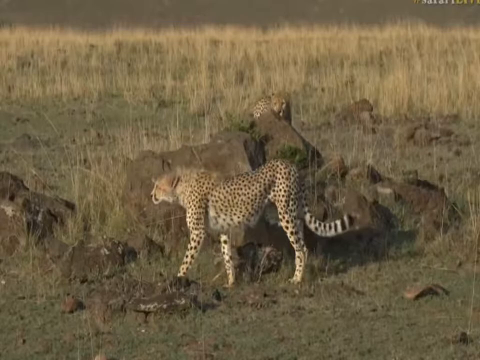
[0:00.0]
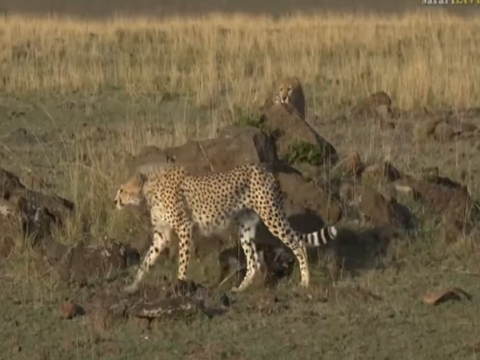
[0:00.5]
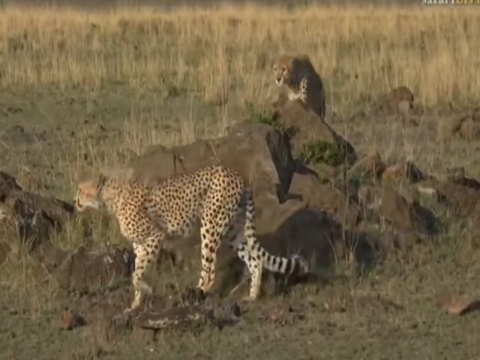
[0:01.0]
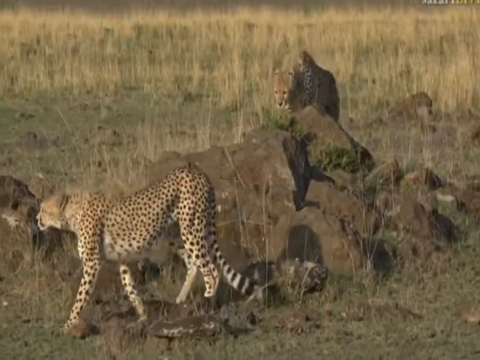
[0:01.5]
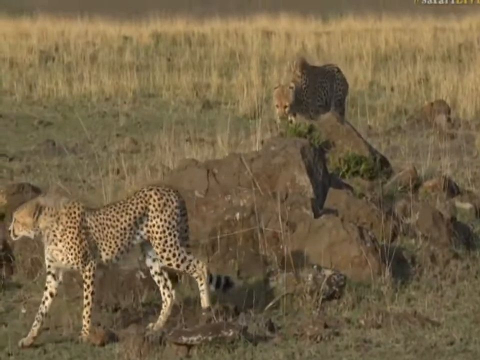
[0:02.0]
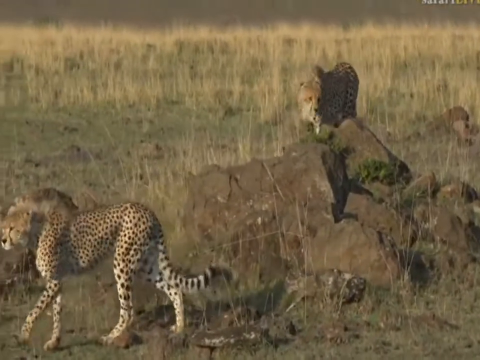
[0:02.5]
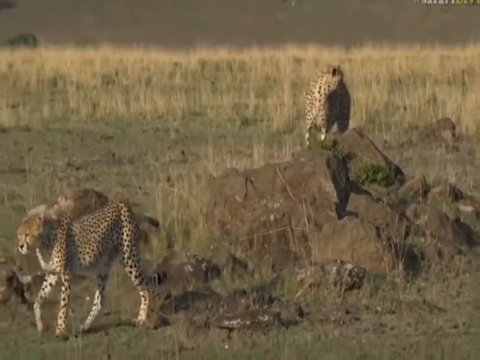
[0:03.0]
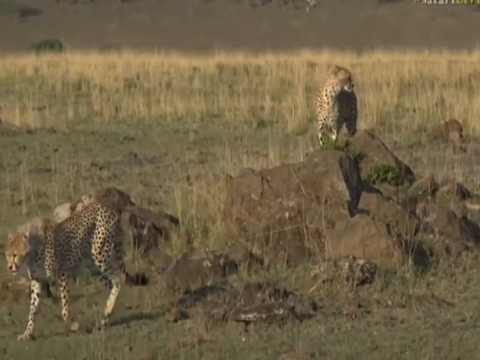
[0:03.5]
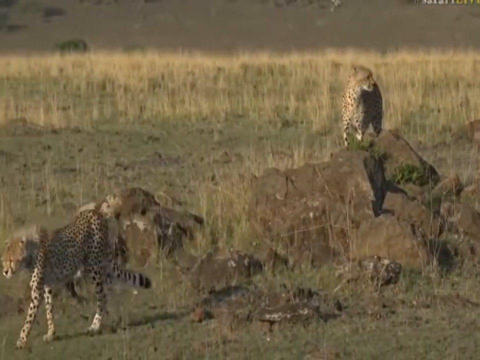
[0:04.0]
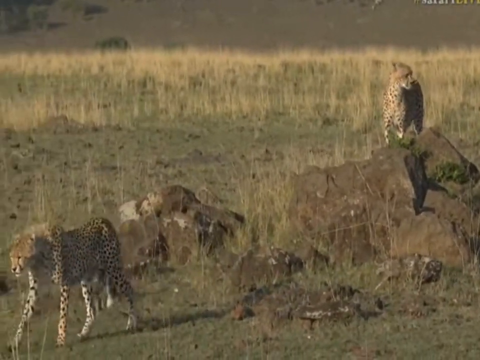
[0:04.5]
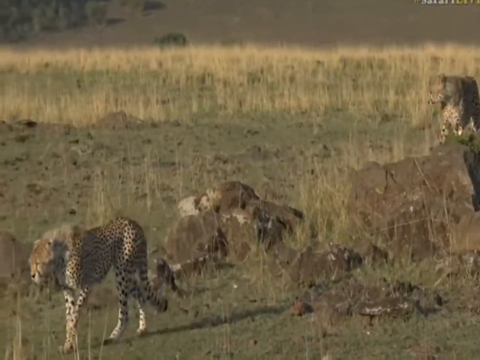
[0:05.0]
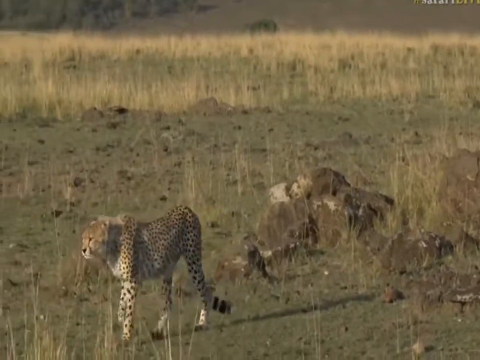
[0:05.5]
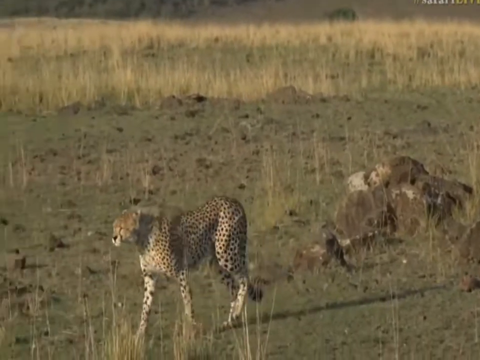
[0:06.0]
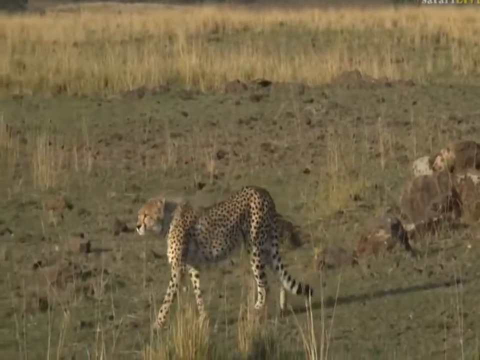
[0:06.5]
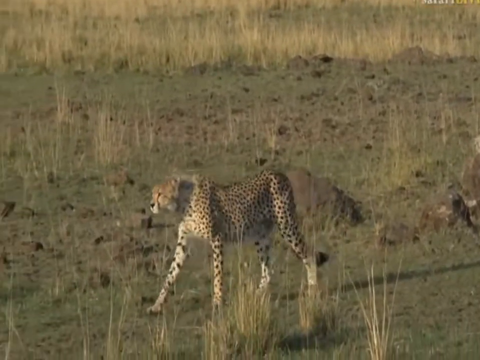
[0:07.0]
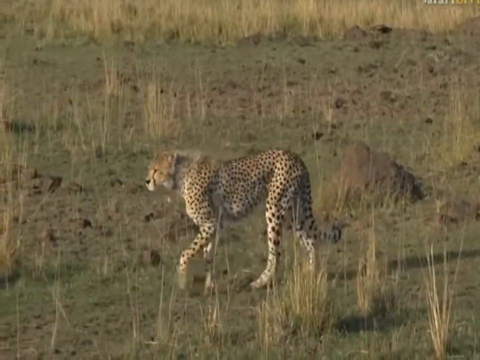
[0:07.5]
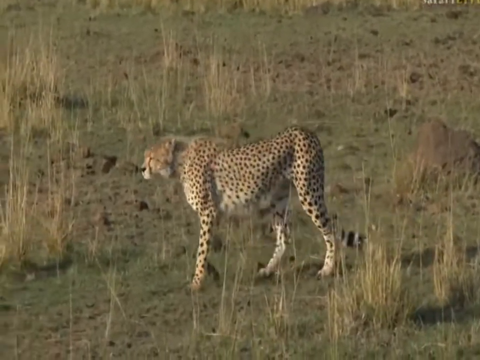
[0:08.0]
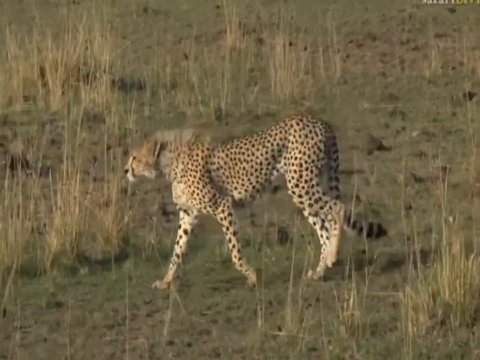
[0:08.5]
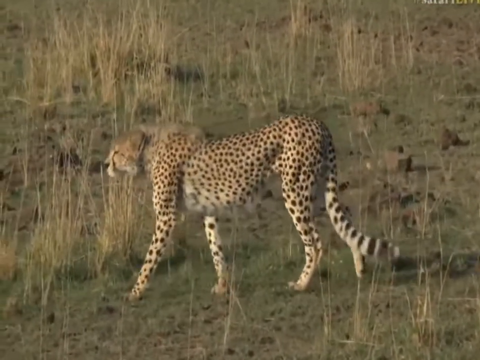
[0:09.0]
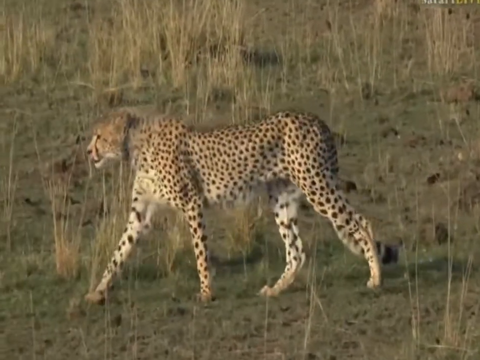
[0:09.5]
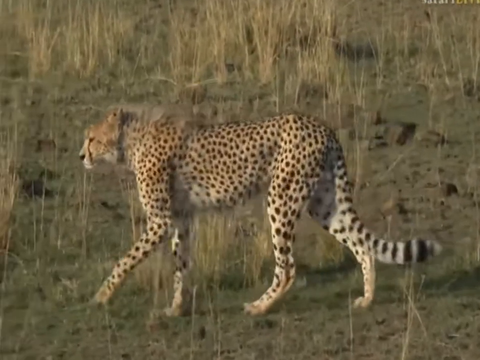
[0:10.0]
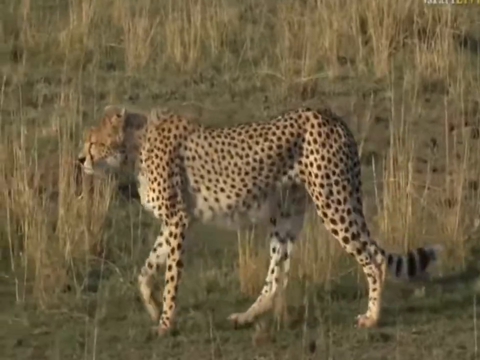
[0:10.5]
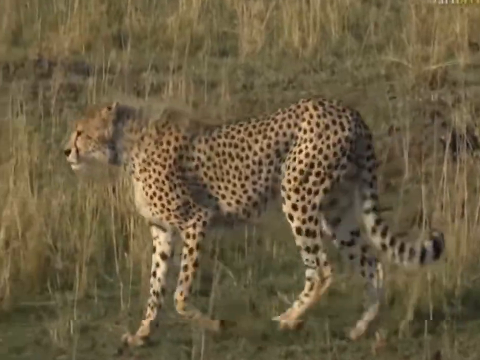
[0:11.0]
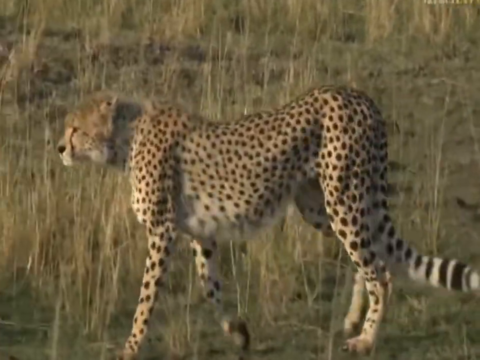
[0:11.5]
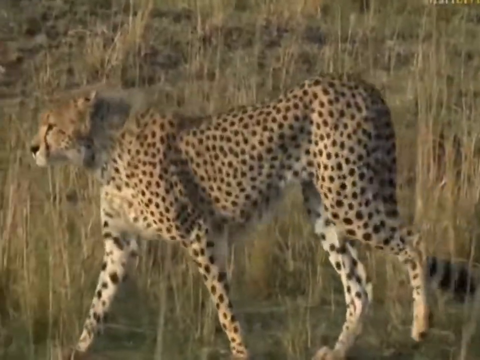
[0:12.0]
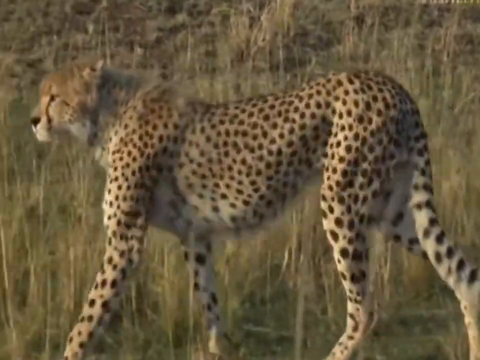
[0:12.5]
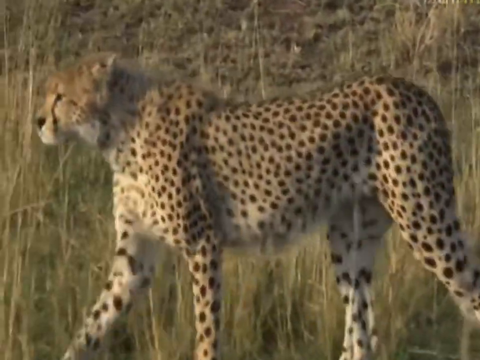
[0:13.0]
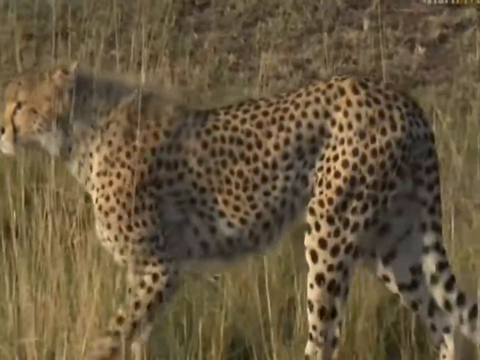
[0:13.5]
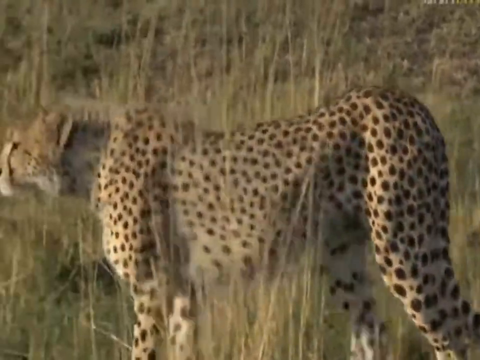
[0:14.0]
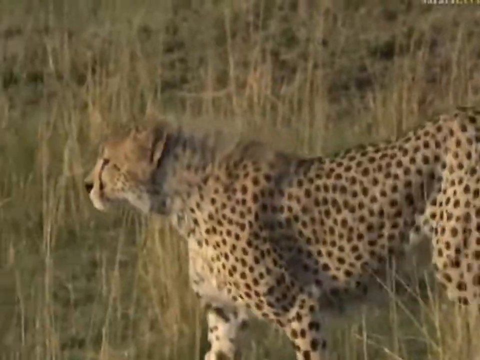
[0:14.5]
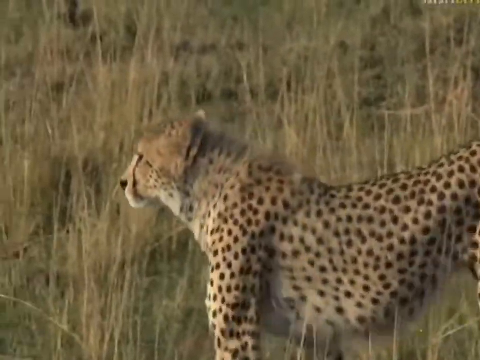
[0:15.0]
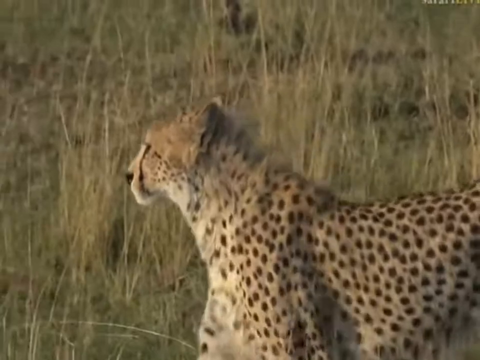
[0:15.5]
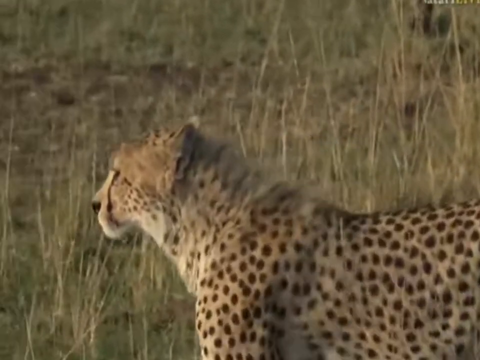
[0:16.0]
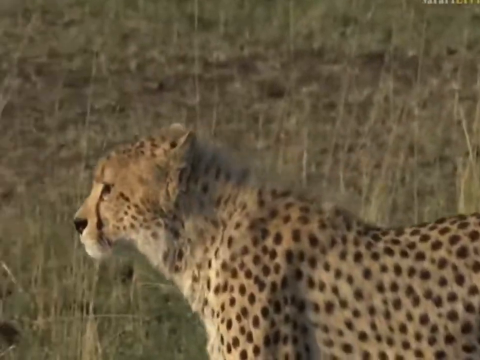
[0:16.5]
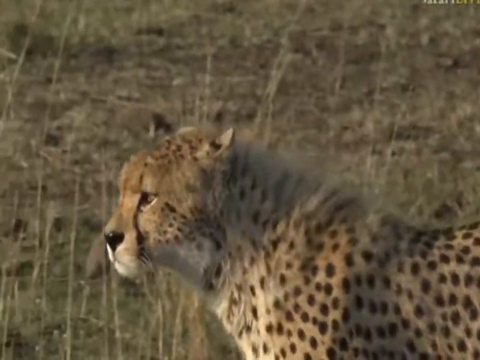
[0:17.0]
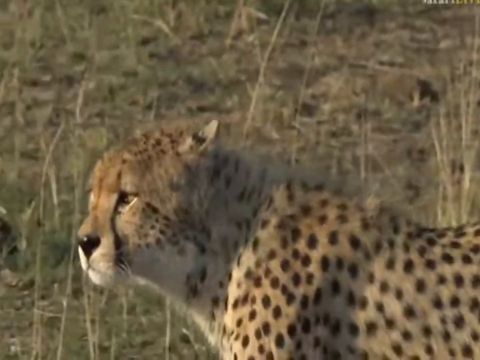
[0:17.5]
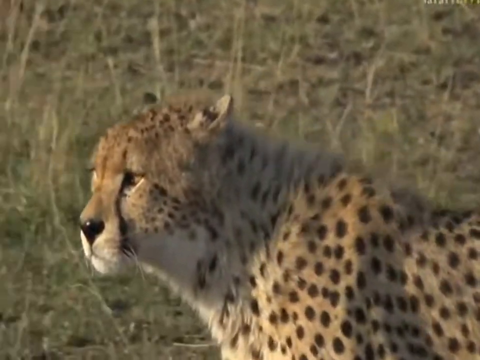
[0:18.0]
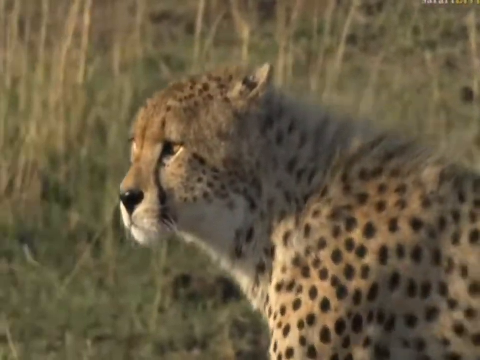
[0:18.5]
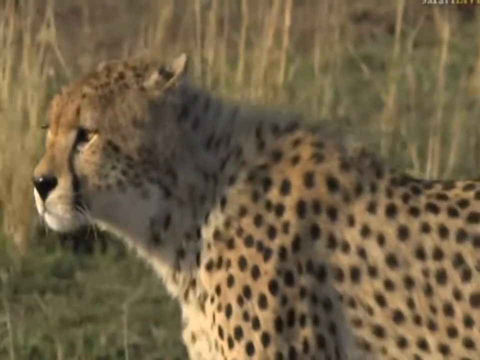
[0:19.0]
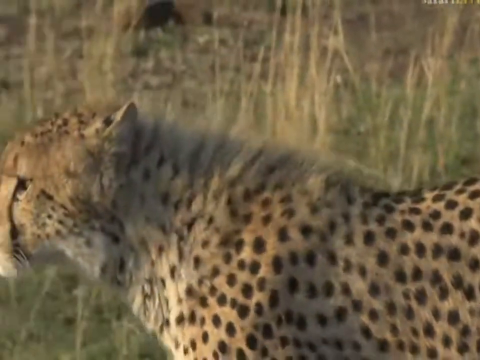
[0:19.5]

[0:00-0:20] This appears to be nature footage of what look like leopards prowling around in a field. One leopard is in the background on top of a rock, while another in the foreground slinks around, walking toward the left side, and the camera follows it to the left. It keeps walking slowly and looking around, sauntering quite comfortably. The field's grass is not fully green but a bit yellowish. The sun is out, and the animal looks around with the sun on its face. The leopards do not appear to be doing anything other than walking around.